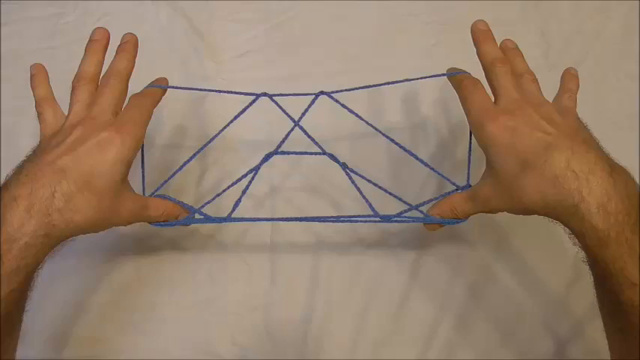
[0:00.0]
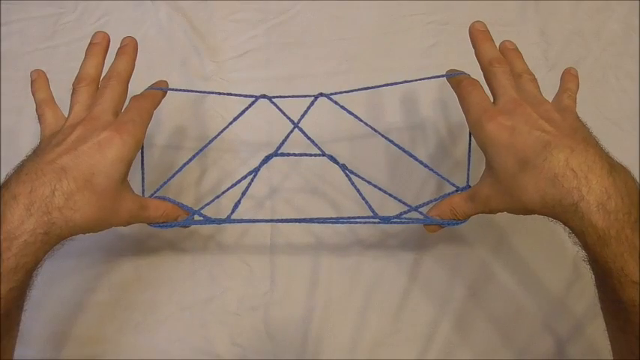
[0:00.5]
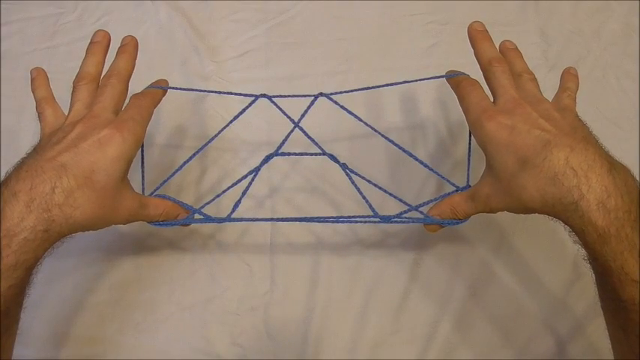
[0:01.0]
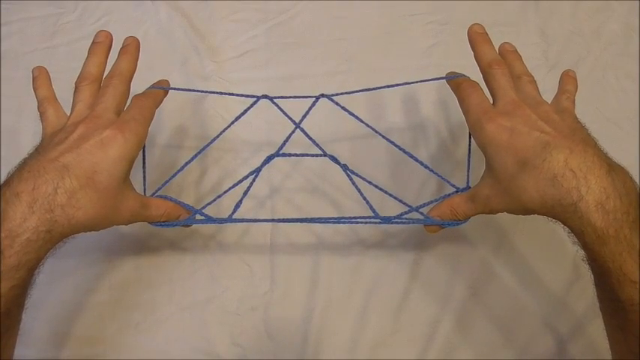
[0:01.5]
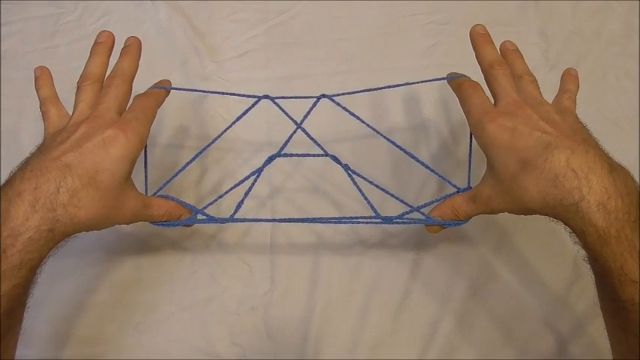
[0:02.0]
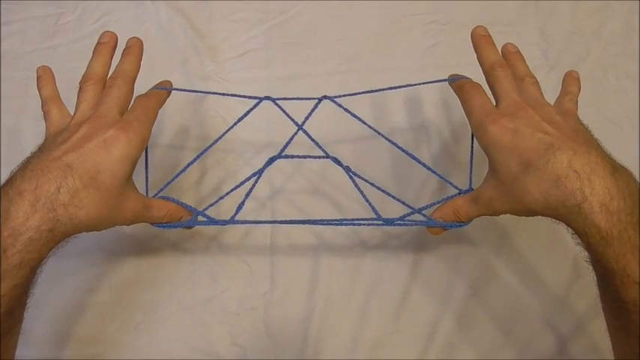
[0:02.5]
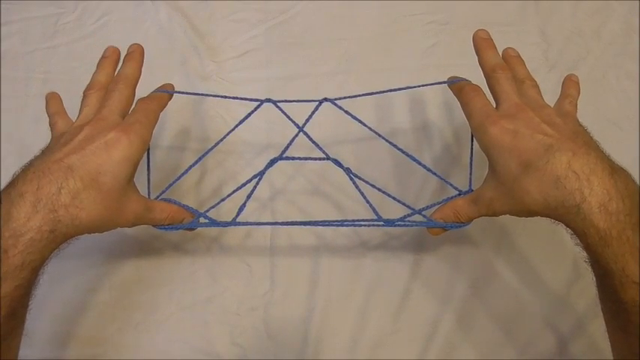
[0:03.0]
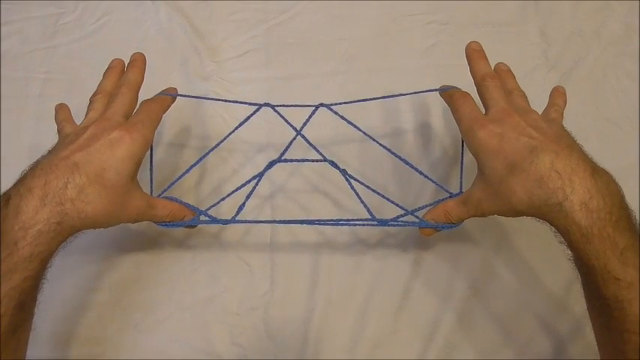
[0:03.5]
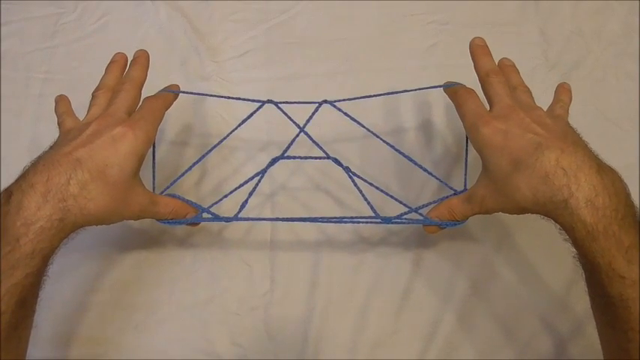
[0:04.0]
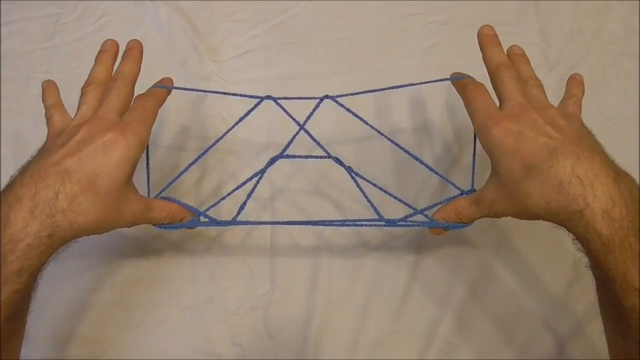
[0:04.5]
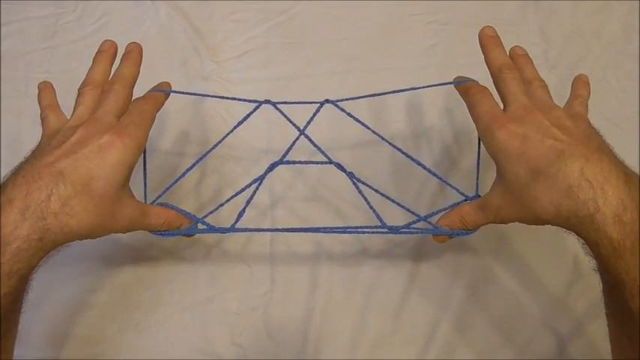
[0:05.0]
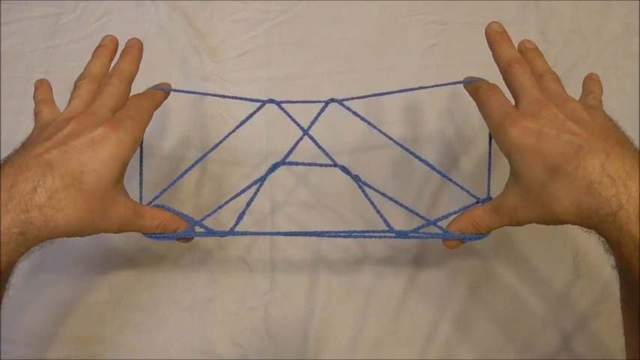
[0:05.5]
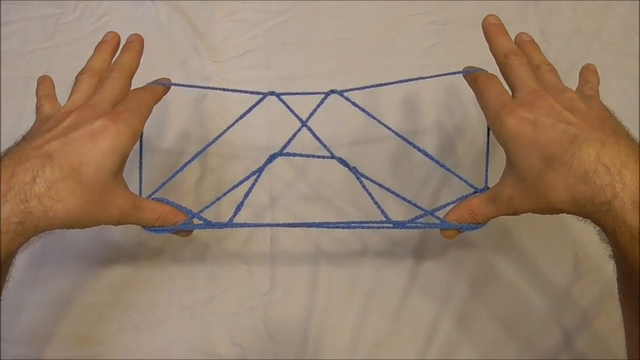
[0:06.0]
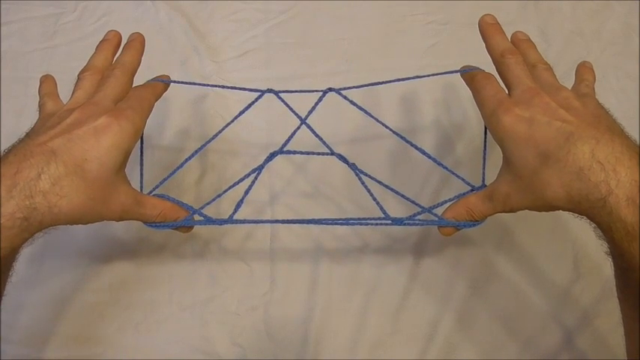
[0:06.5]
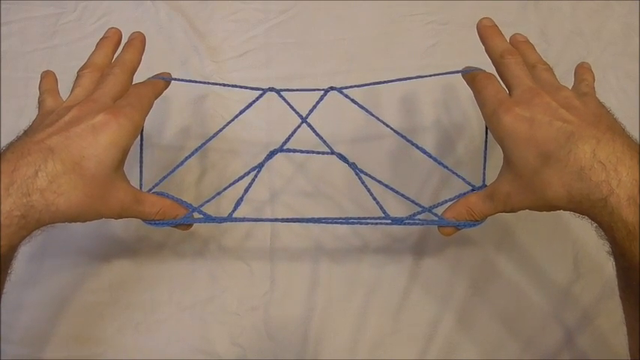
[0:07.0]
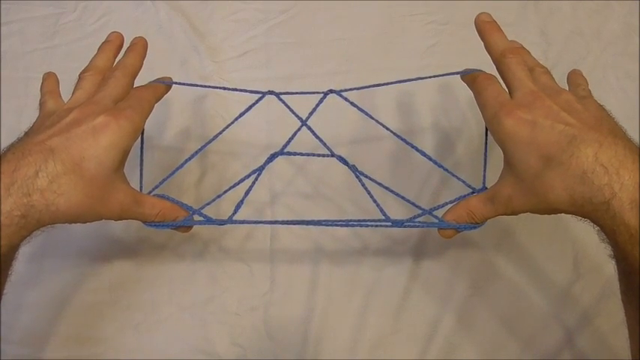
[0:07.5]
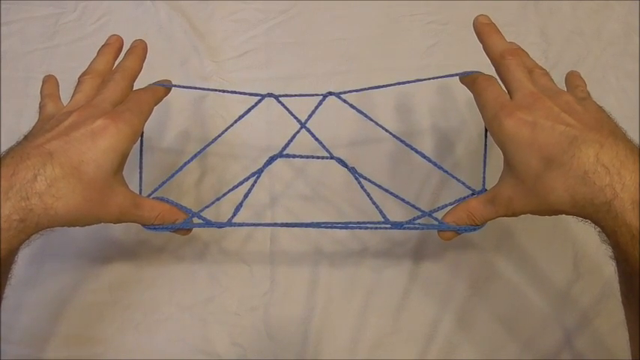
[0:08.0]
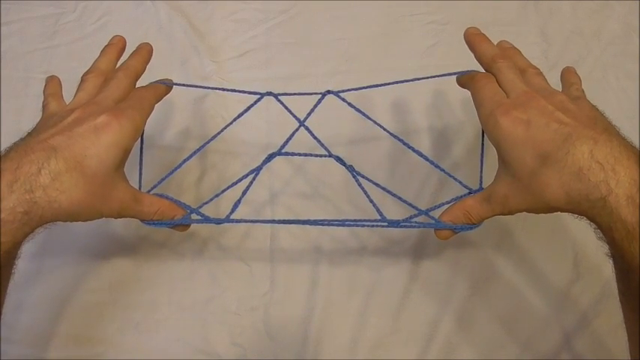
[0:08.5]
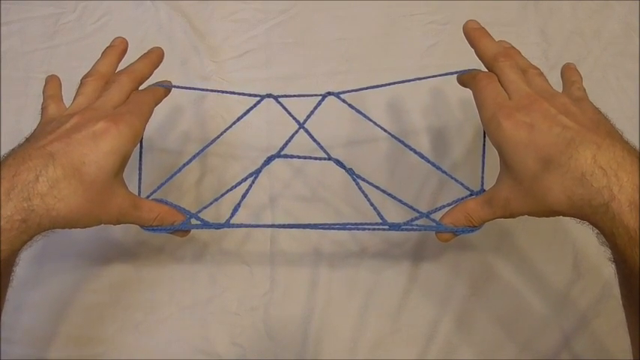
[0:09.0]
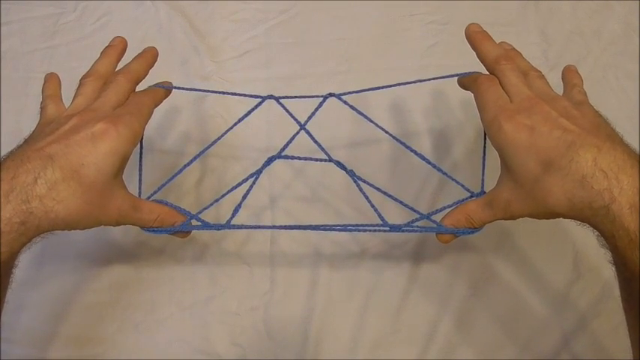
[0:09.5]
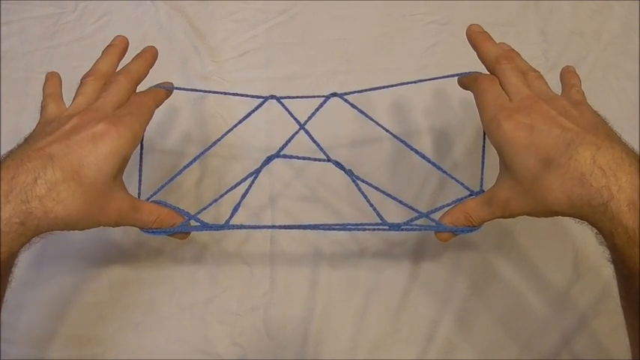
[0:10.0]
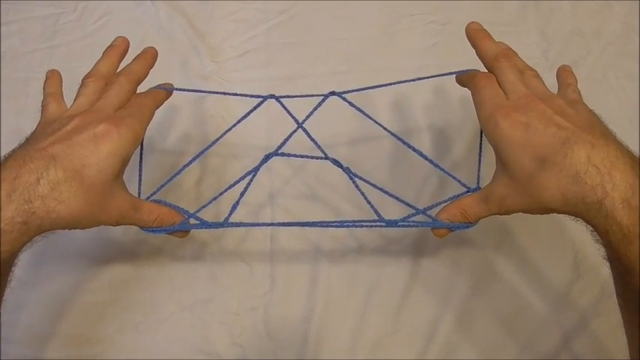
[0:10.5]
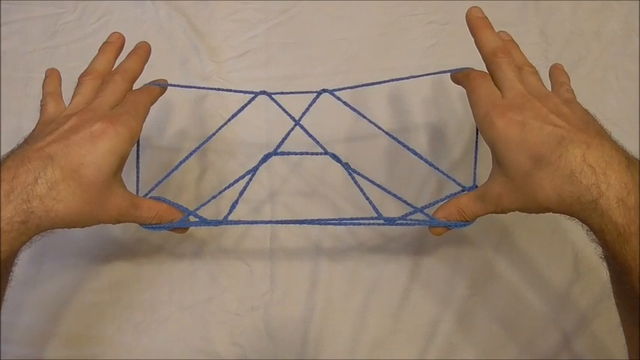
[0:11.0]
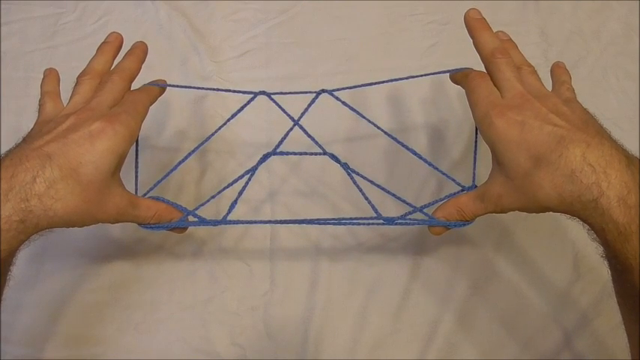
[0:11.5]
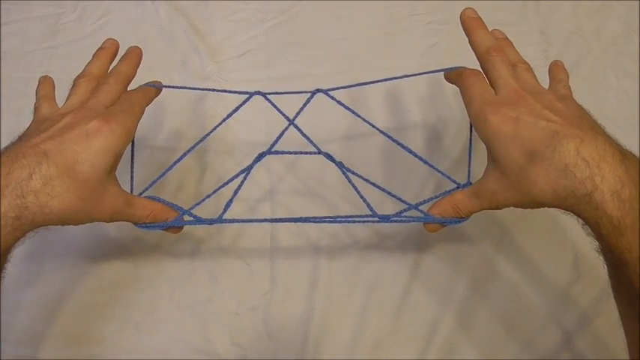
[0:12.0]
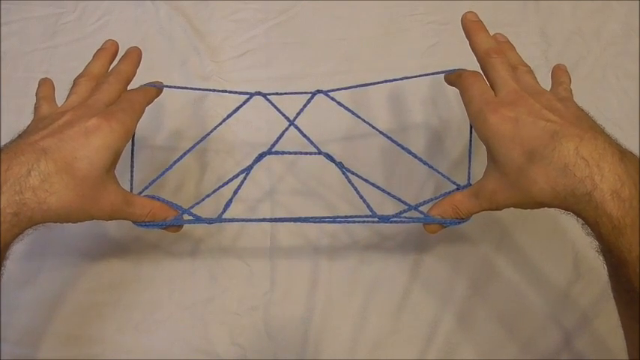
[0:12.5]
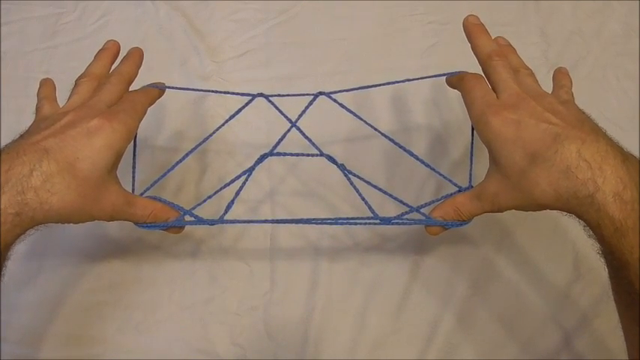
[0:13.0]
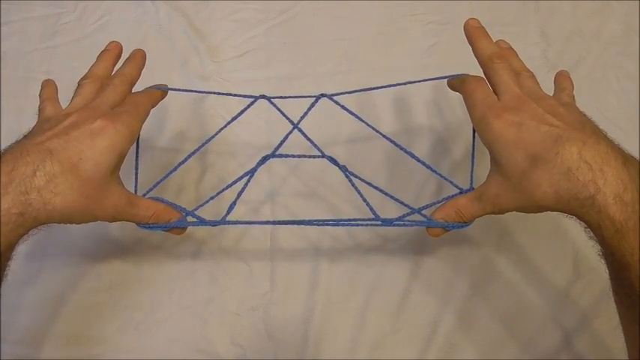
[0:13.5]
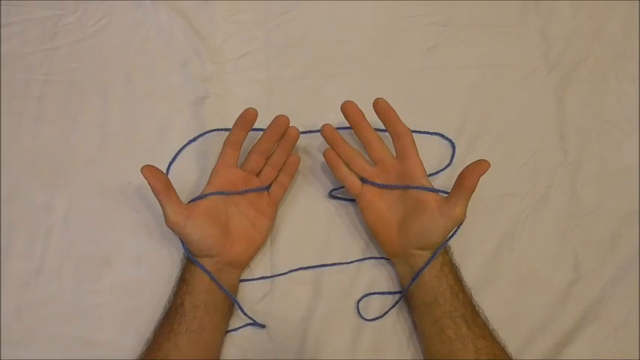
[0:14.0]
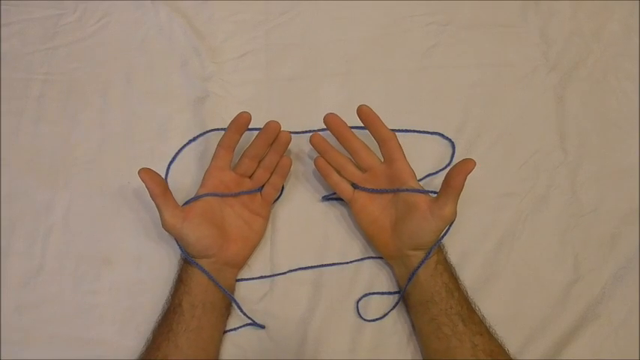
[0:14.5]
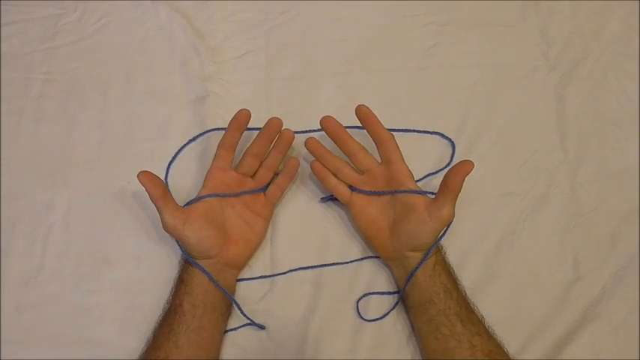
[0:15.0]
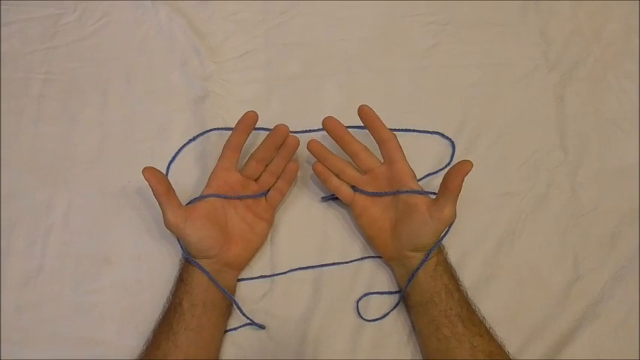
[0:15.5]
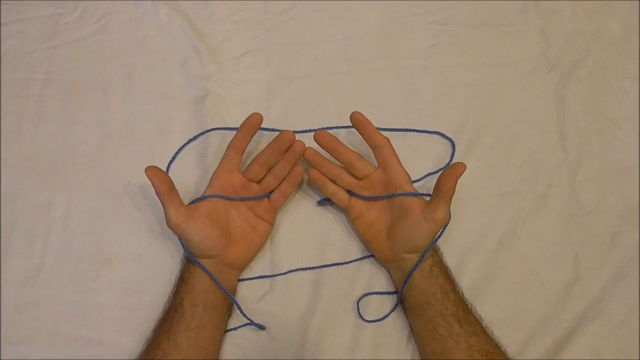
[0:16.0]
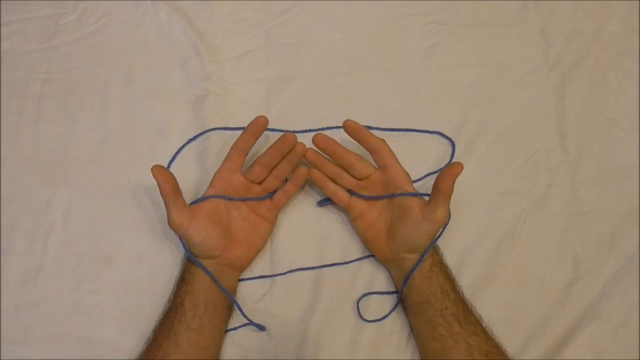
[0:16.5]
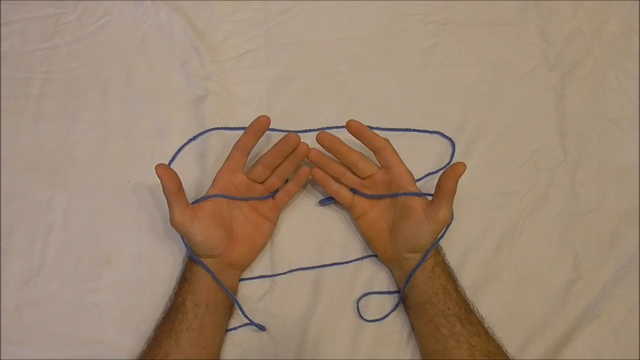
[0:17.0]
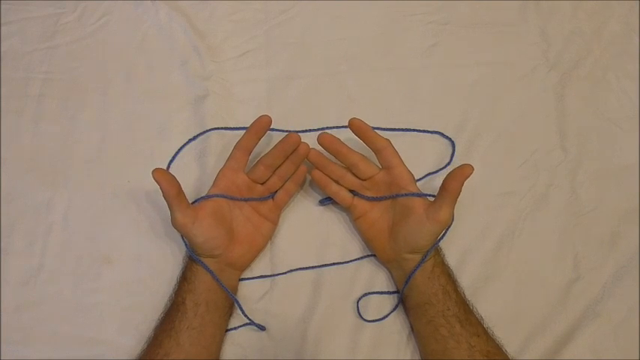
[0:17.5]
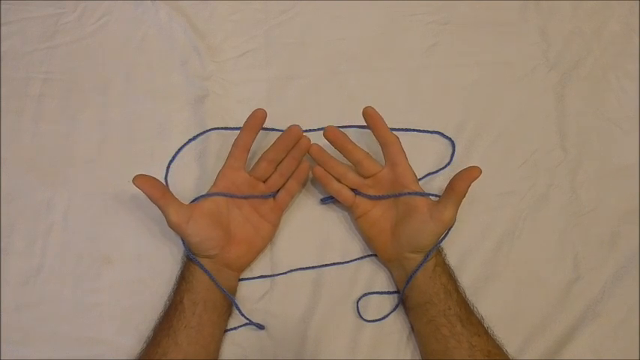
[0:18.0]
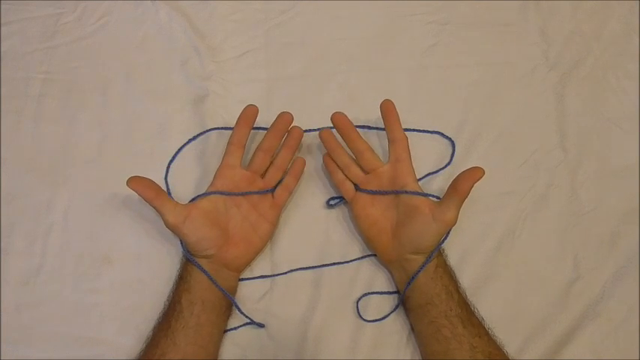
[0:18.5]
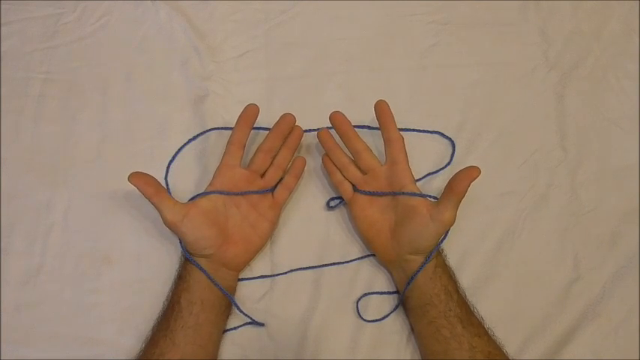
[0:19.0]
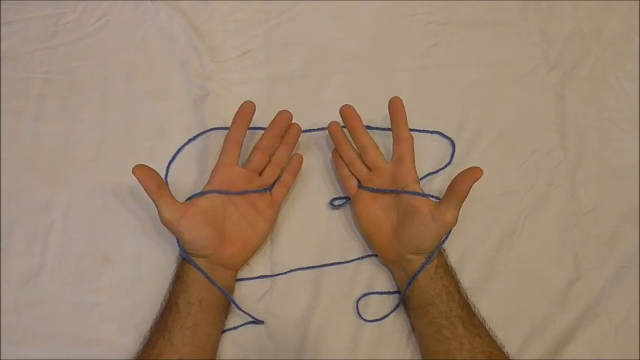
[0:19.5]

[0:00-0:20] A man holds his hands out; there is hair on his arms. Using the pointing finger and thumb of each hand, he stretches out a string configuration of what looks like blue string. He stretches it into a rectangular shape, and inside it the string looks like mountains, kind of like mountaintops, with different triangles overlapping each other. He does this against some type of white tablecloth, and the shadow of his fingers shows on the tablecloth. His fingers move slightly as he tries to hold them steady. Then his hands flip to show the palms of both hands; the blue string is no longer tight but is woven through his fingers, and his hands are relaxed on the table. He moves his hands around slowly. The hands appear to be a man's, judging by the hair and the shape of the fingers.